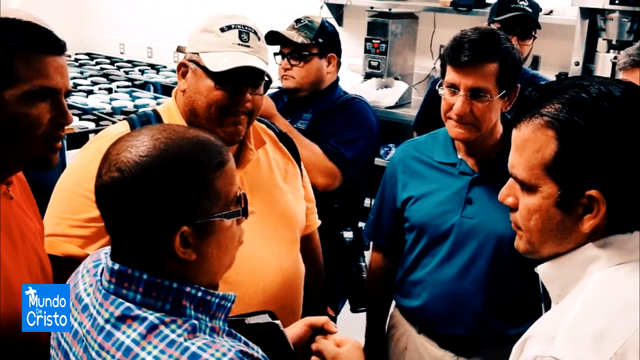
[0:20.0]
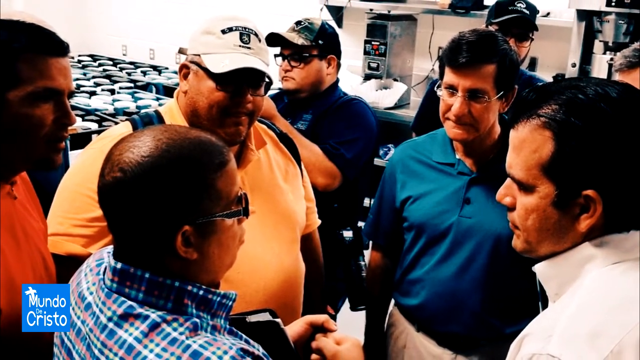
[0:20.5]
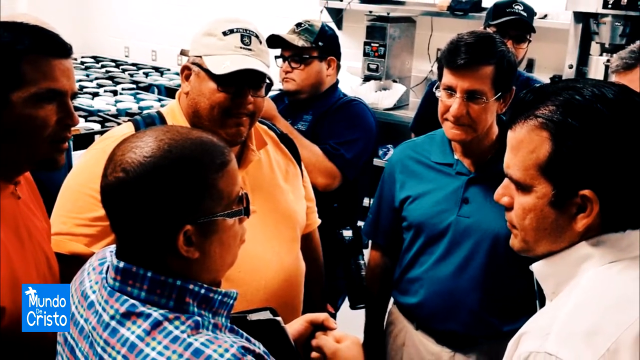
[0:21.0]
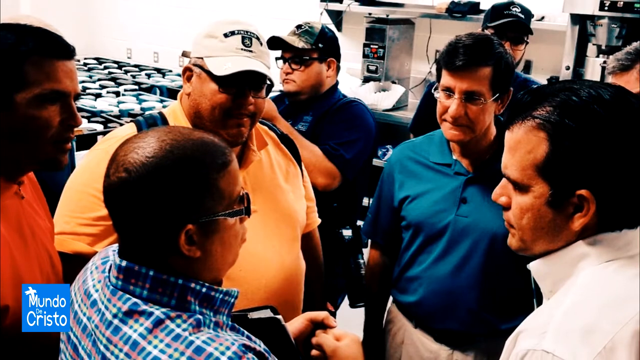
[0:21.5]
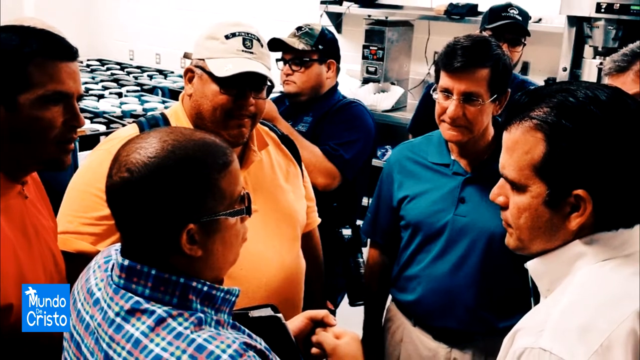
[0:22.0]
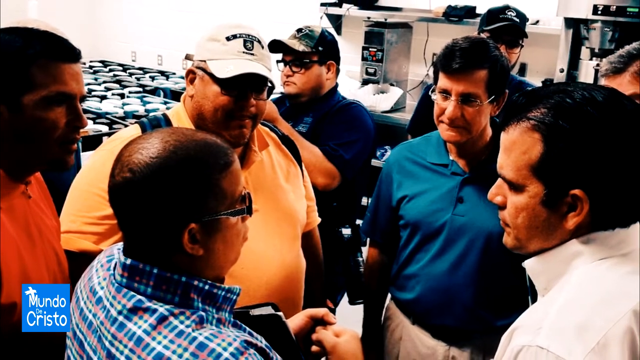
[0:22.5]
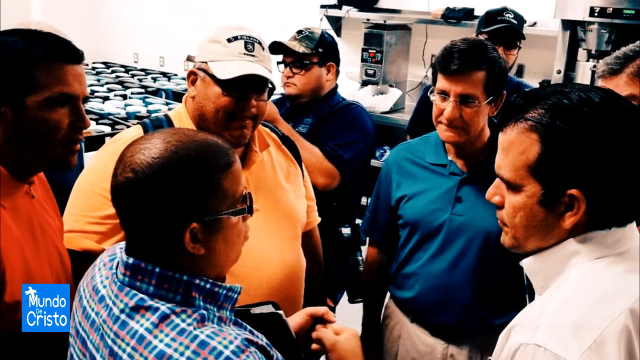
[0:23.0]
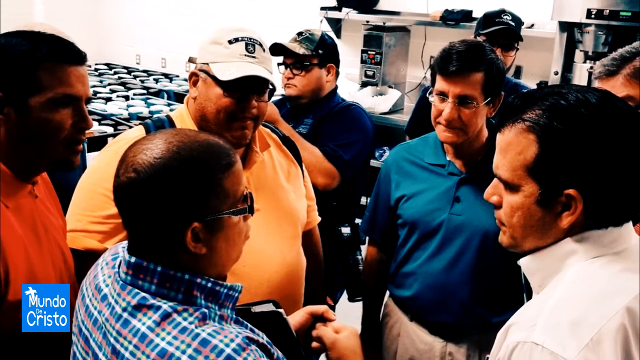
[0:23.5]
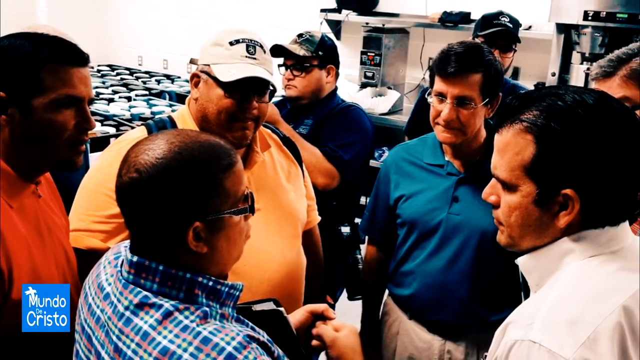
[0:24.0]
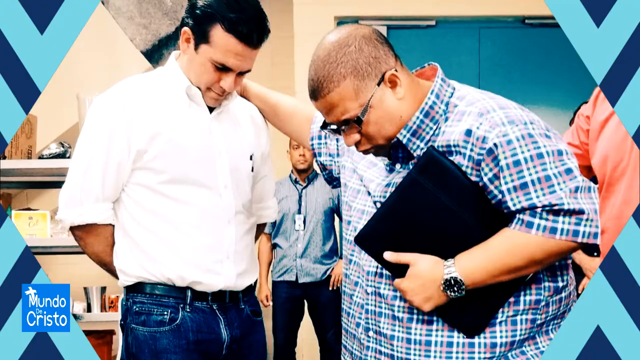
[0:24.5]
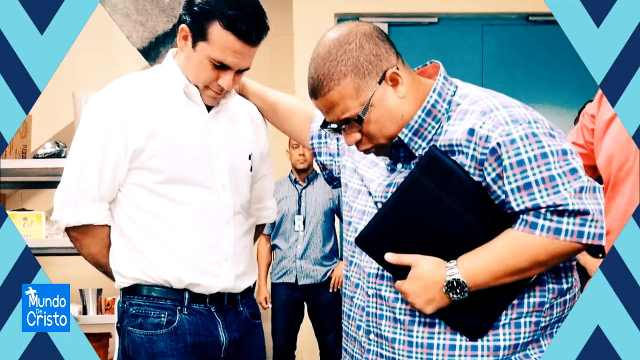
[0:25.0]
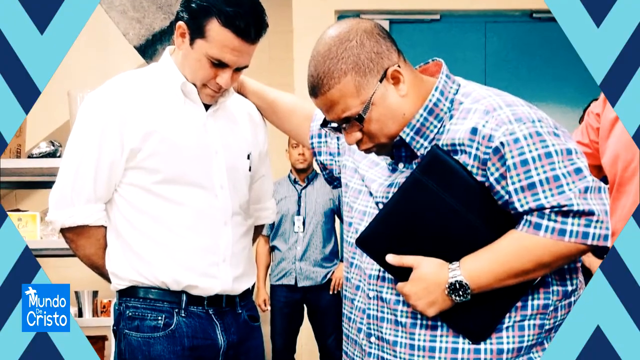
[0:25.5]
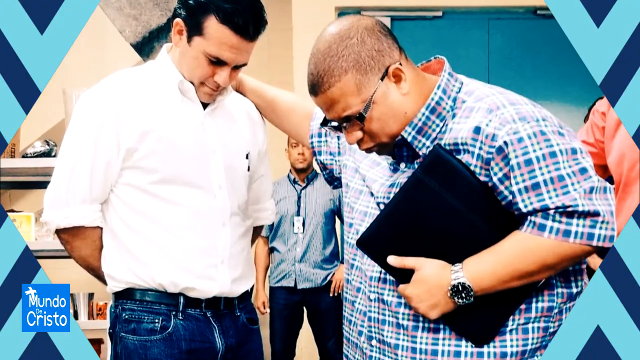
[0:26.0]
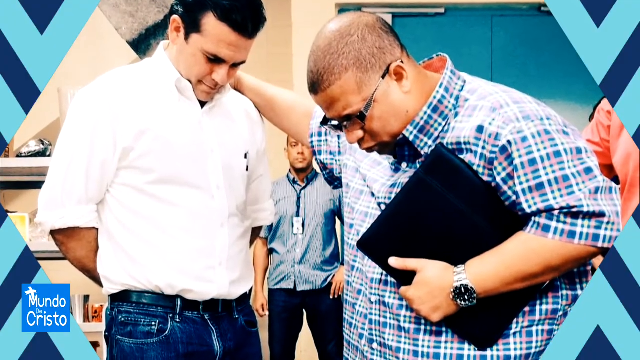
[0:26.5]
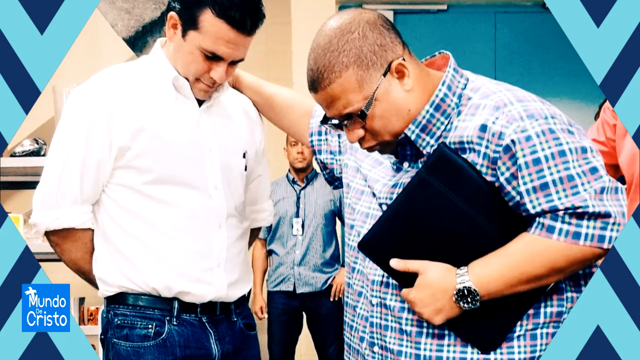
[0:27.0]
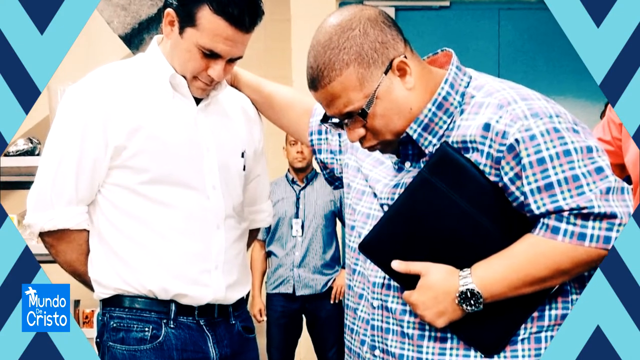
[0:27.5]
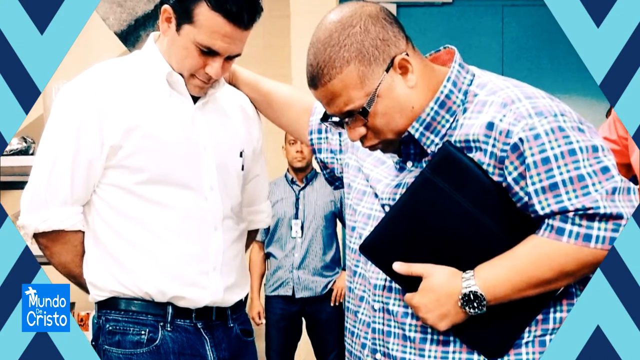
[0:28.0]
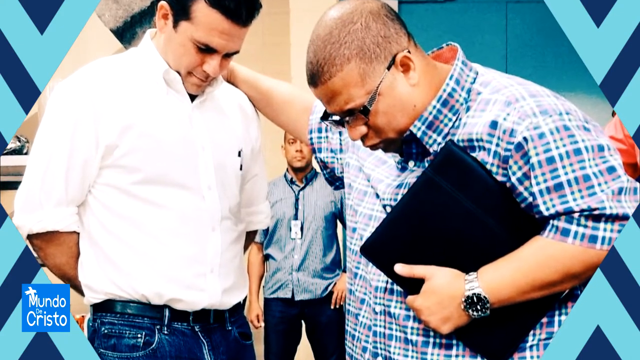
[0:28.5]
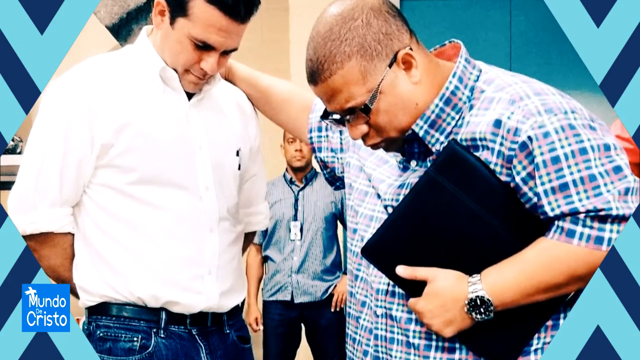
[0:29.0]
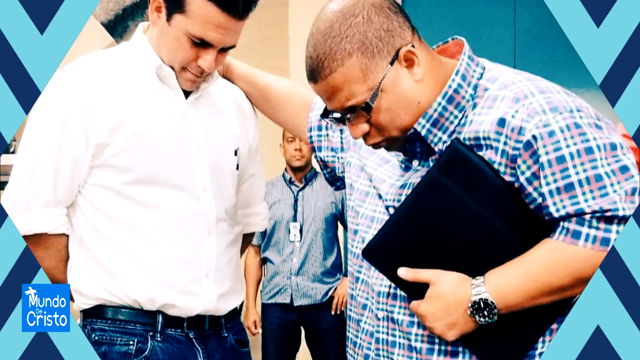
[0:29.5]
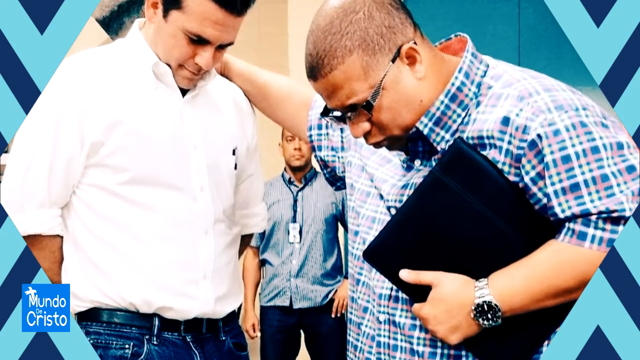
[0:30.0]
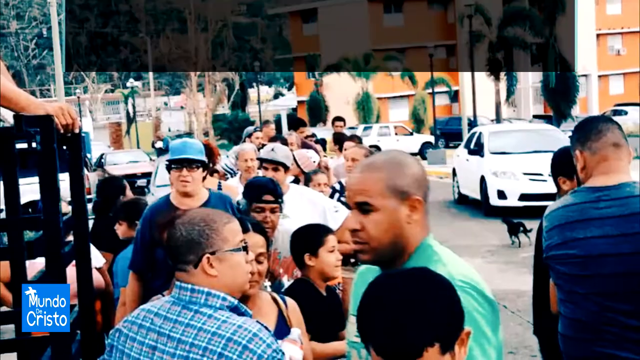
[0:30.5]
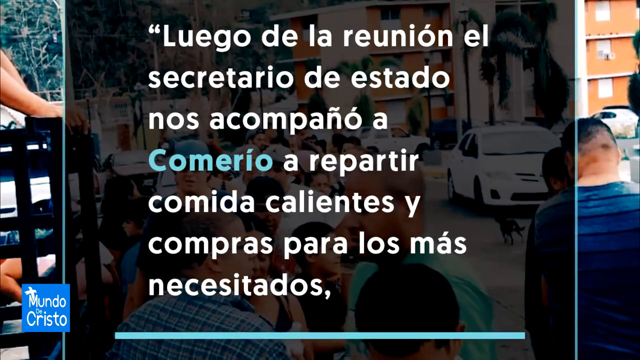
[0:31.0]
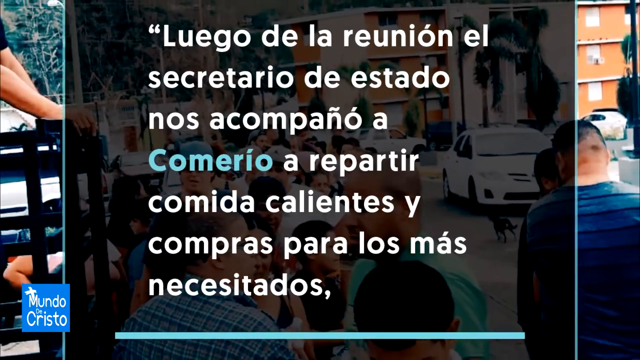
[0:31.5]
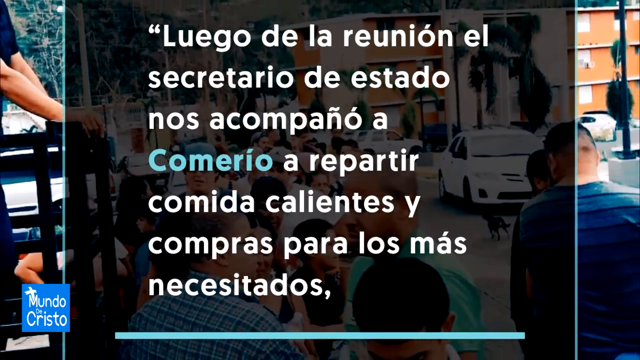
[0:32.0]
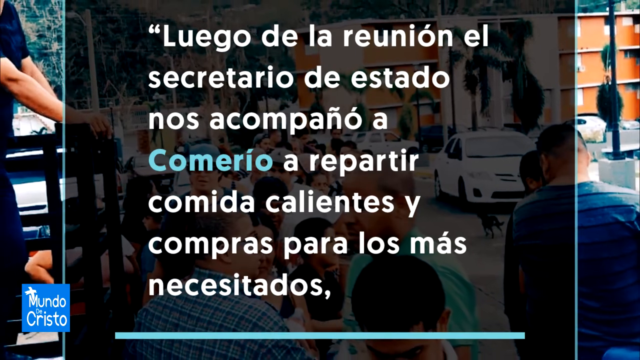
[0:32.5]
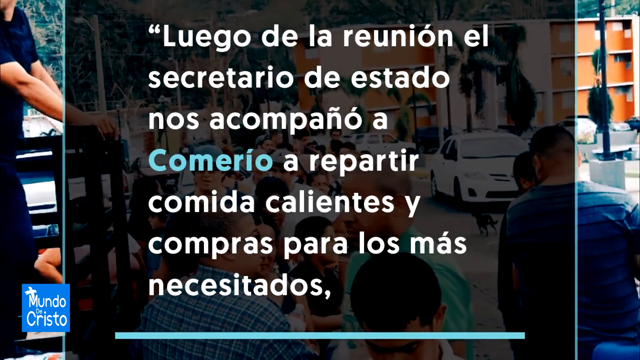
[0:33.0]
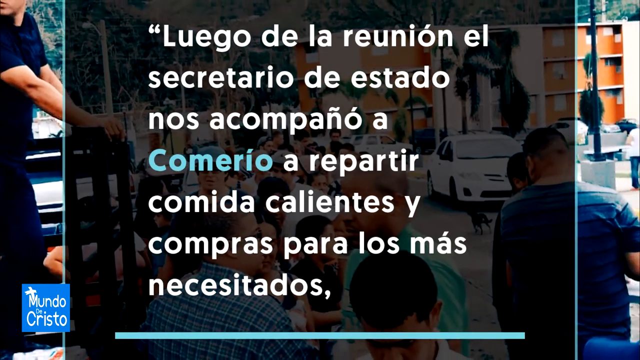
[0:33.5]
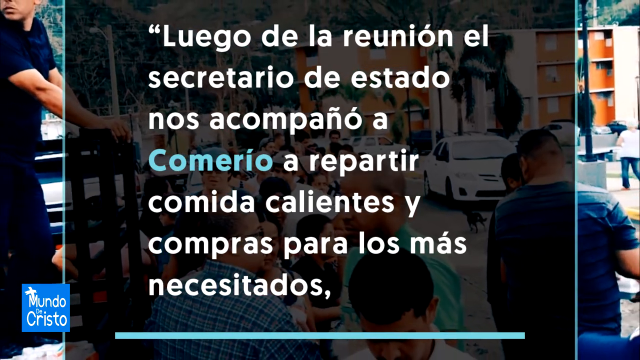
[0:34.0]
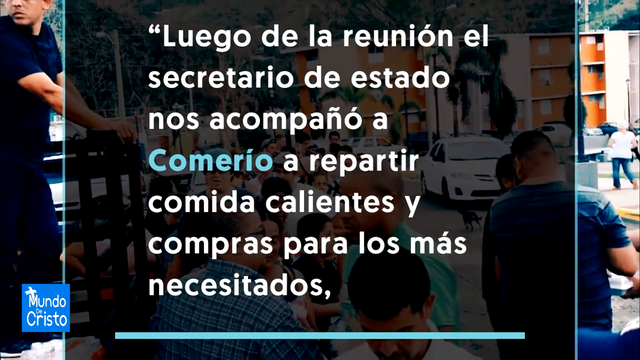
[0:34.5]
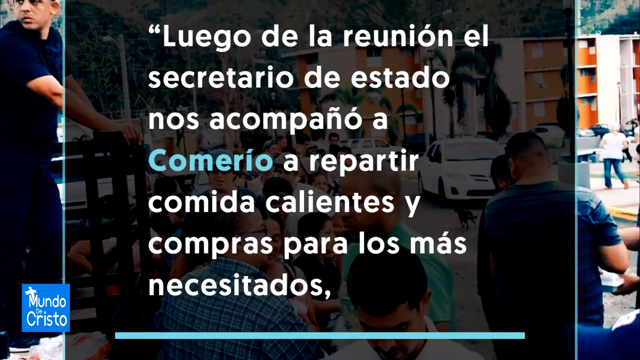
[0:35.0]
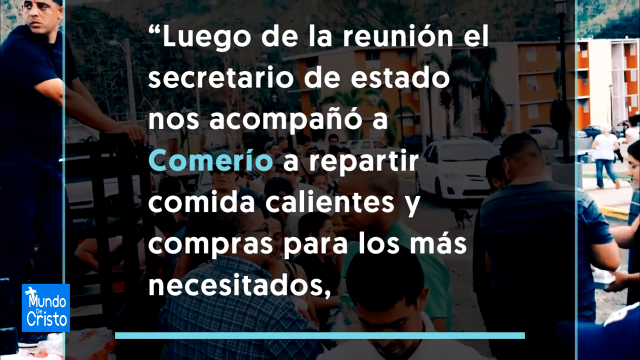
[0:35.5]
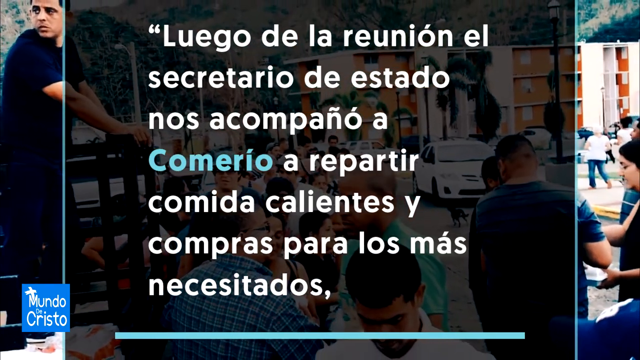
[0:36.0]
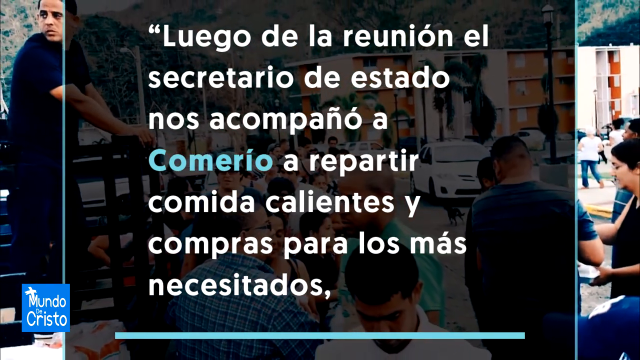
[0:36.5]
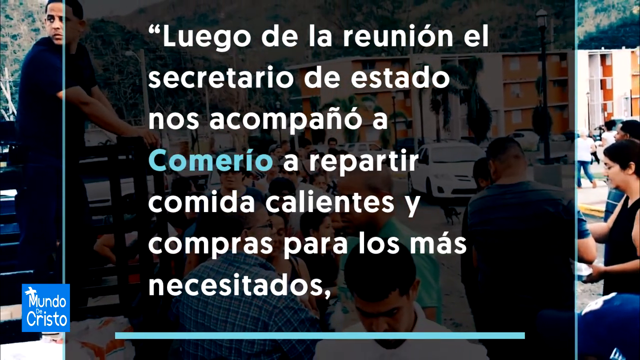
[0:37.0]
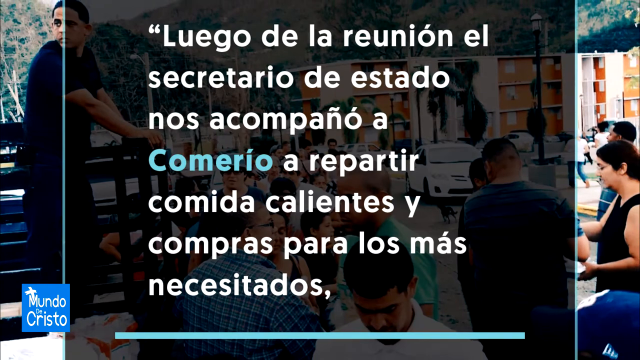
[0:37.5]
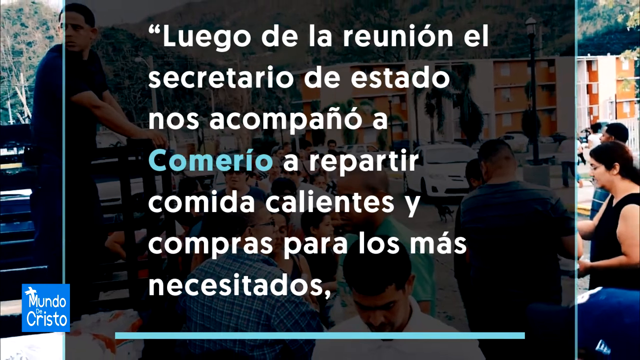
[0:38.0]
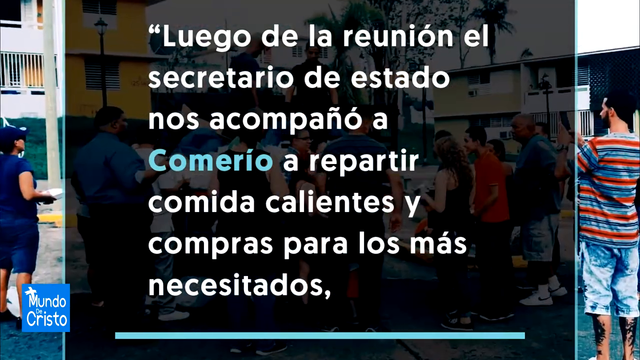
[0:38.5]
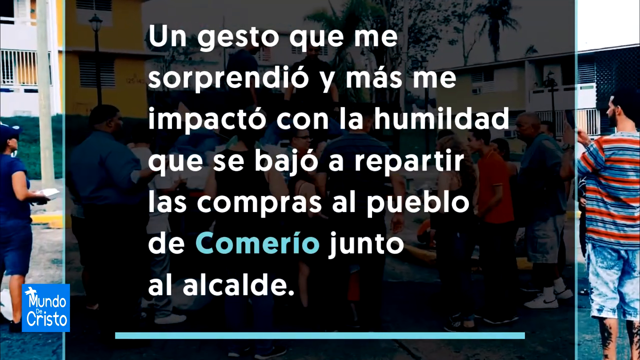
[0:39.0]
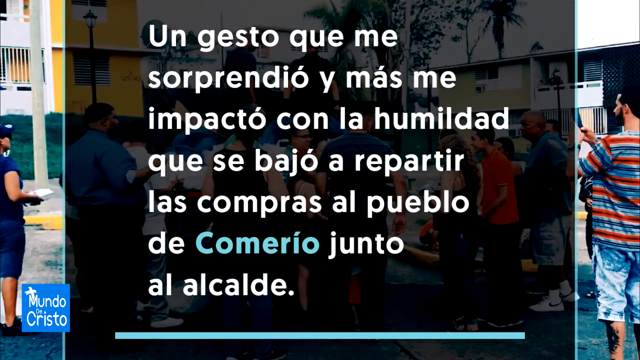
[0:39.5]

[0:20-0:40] A group of men in the room are huddled around the man in the blue and white striped shirt with the bald head and glasses, listening intently to what he says. The video slowly pans out and changes to the same man in the blue and white striped shirt praying over a man to his right who wears a white collared shirt. White bold letters then pop up in the middle of the screen reading "Luego de la reunion el secretario de estado nos acompano a comerio a repartir comida calientes y compras para los mas necesitados," while in the background various people are hanging out outside, with a white and orange building and cars behind them. The camera then shows a different scene of people in the background, and more white lettering appears on the screen reading "un gesto que me sorprendió y más me impactó con la humildad que se bajó a repartir las compras al pueblo de Comerio junto al alcalde."